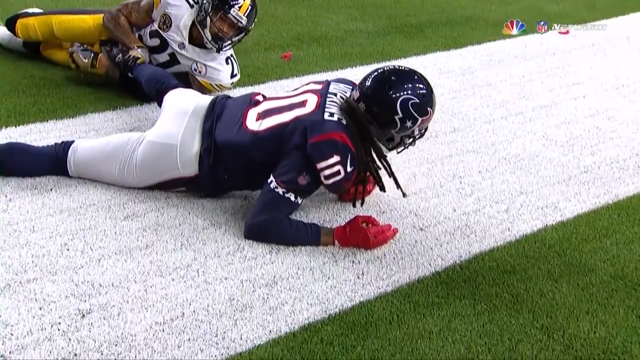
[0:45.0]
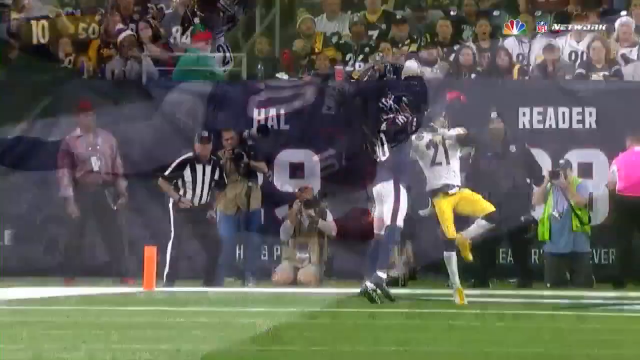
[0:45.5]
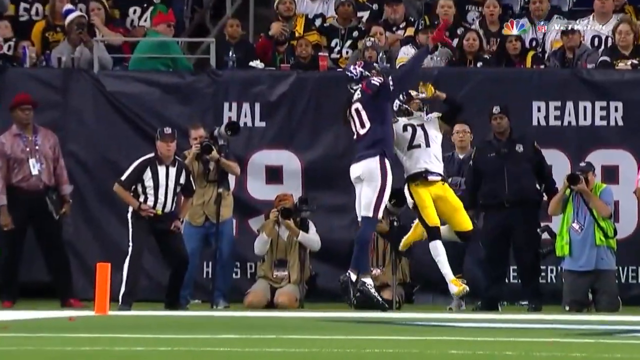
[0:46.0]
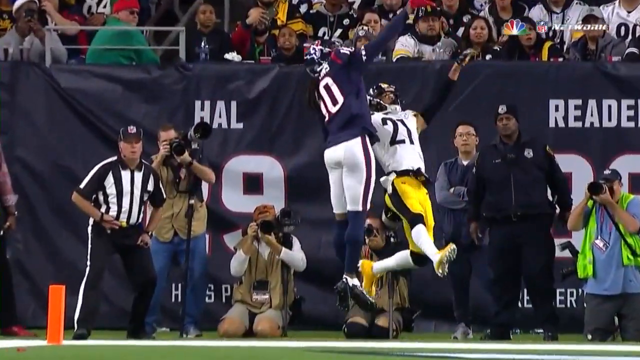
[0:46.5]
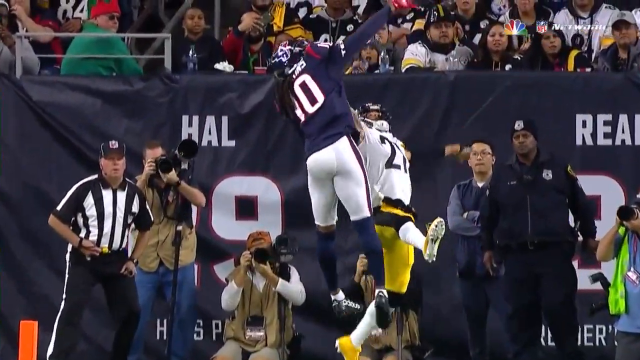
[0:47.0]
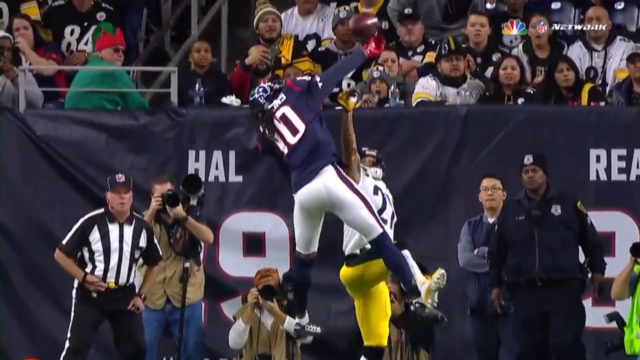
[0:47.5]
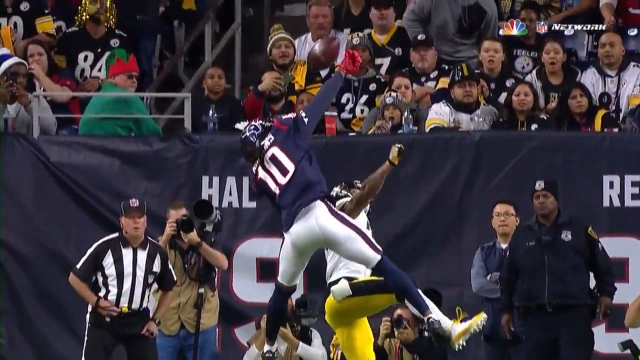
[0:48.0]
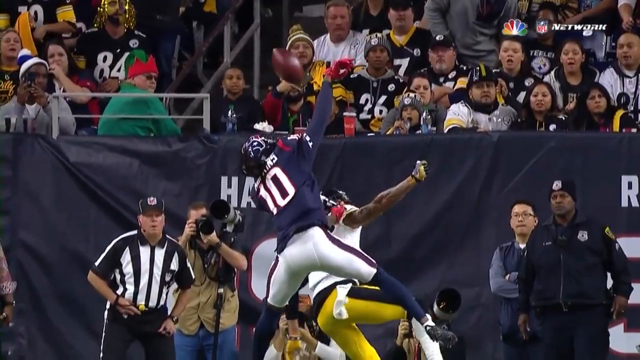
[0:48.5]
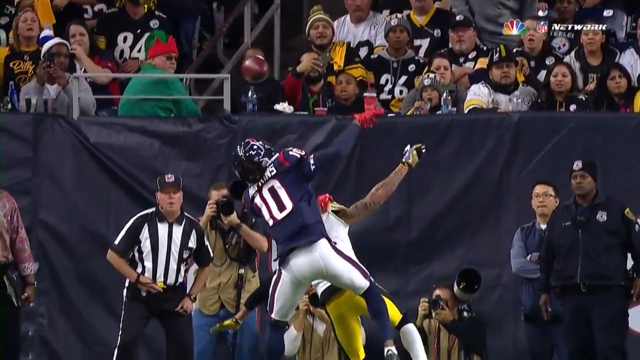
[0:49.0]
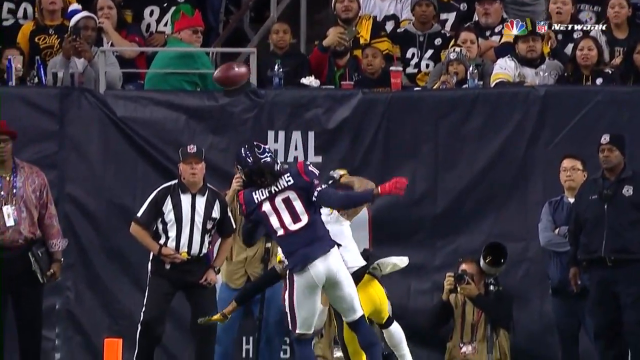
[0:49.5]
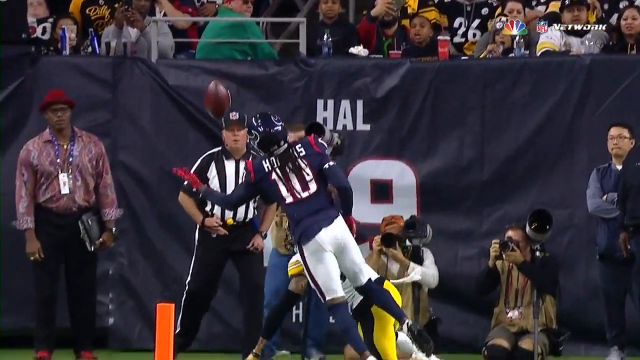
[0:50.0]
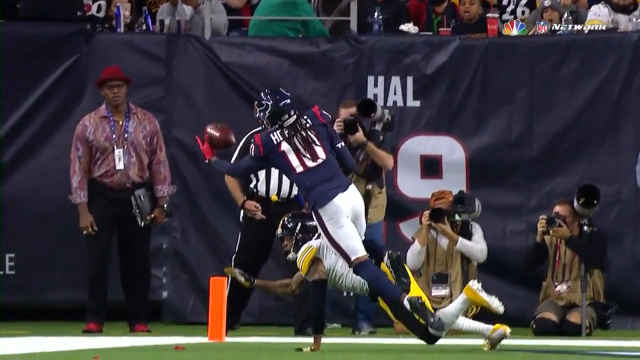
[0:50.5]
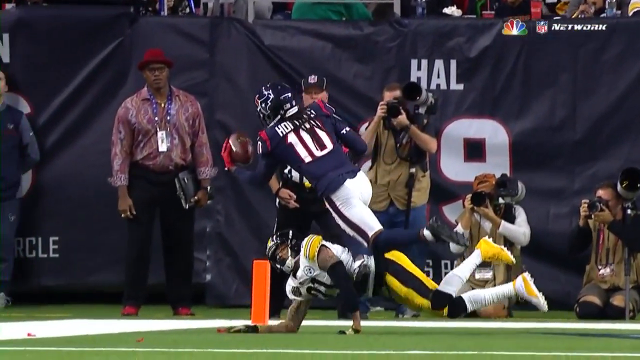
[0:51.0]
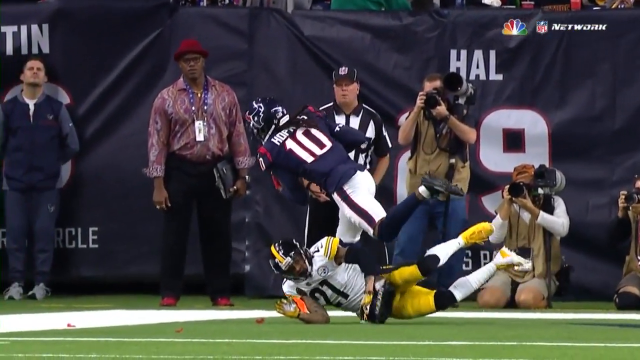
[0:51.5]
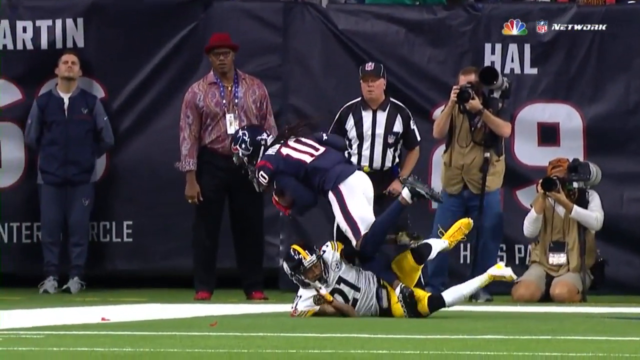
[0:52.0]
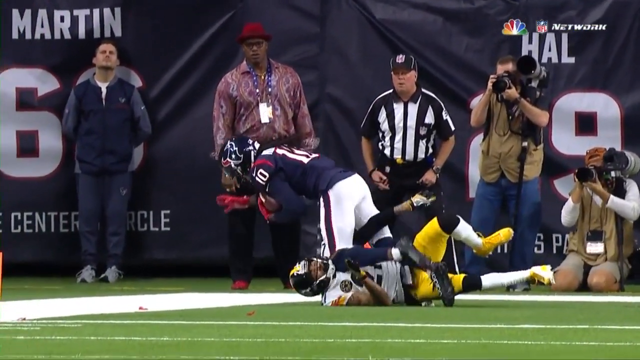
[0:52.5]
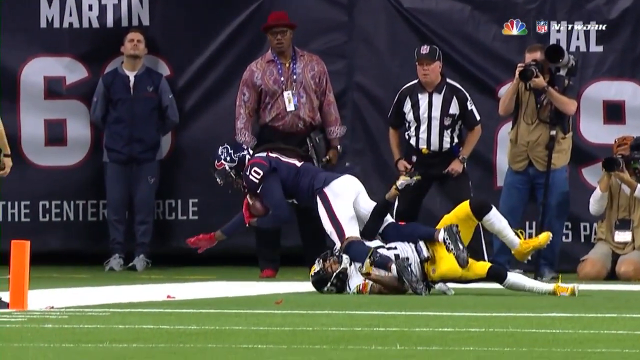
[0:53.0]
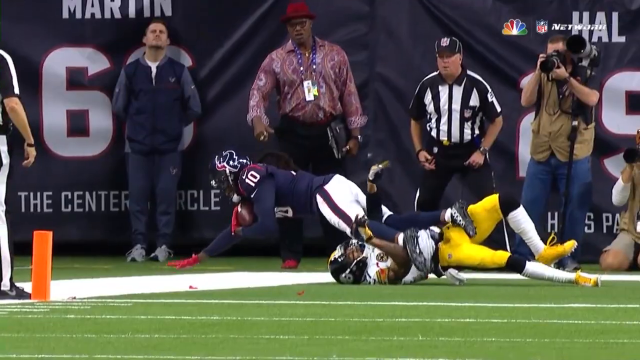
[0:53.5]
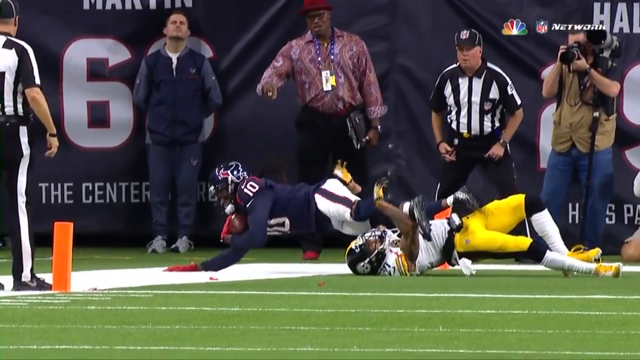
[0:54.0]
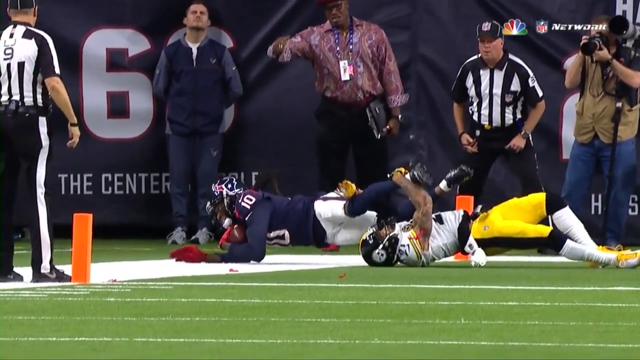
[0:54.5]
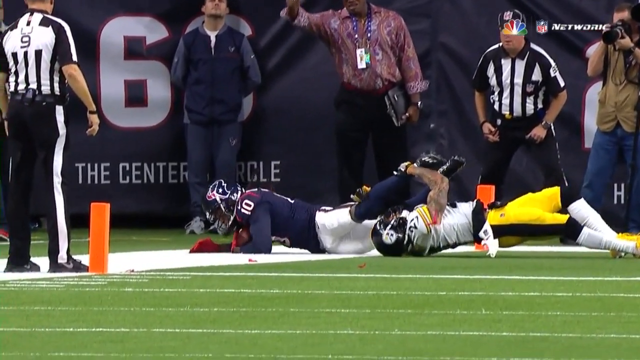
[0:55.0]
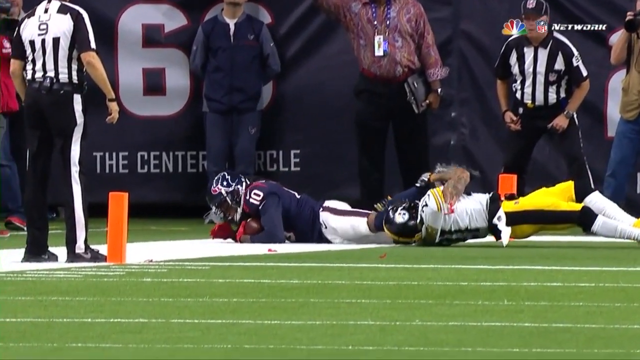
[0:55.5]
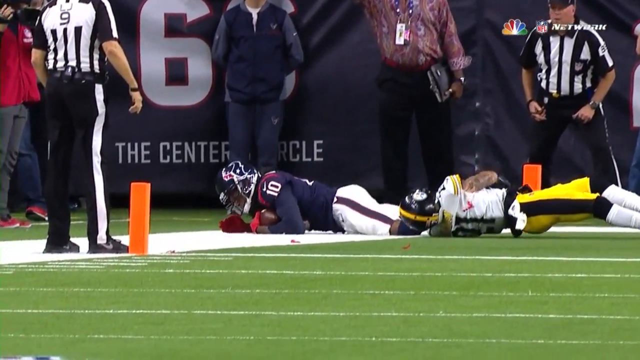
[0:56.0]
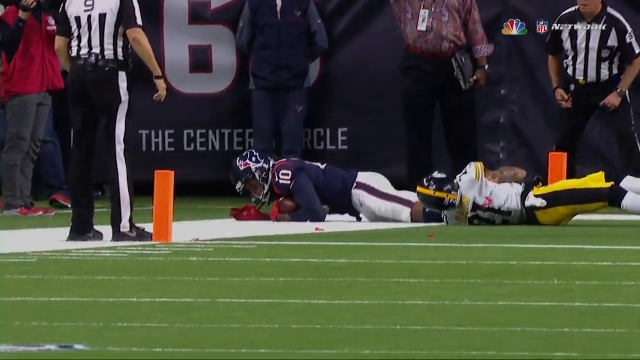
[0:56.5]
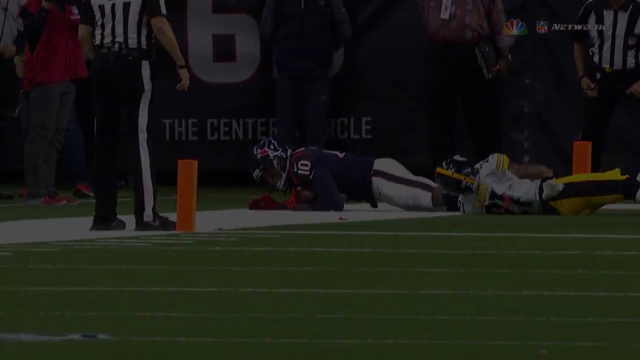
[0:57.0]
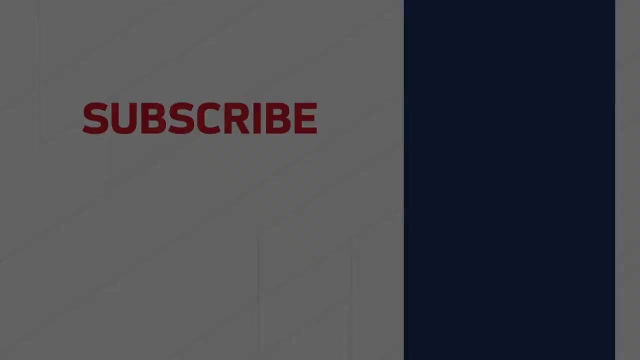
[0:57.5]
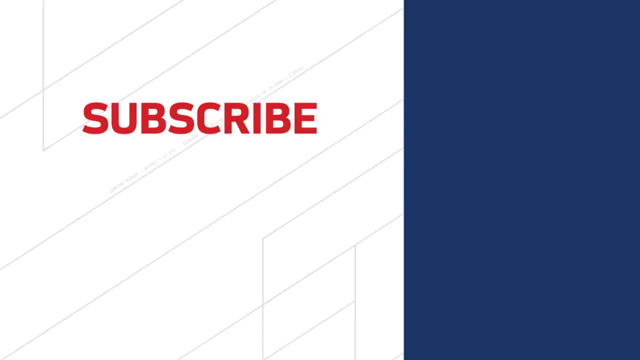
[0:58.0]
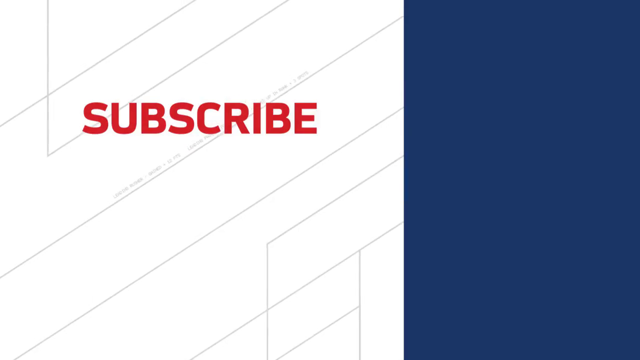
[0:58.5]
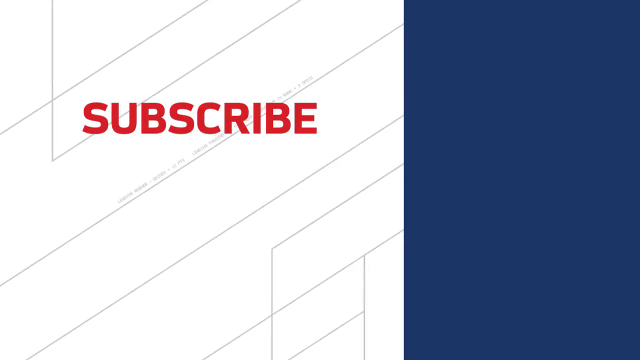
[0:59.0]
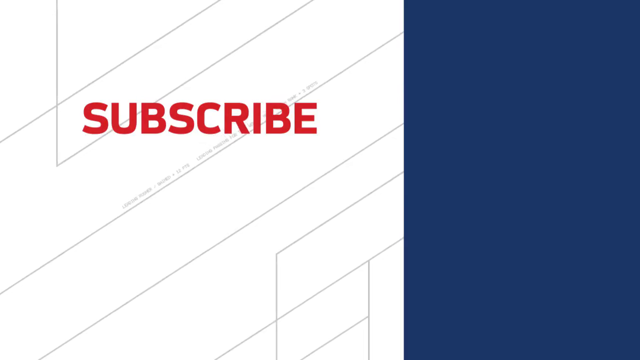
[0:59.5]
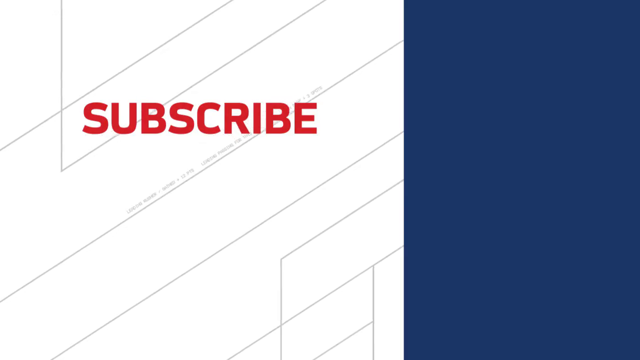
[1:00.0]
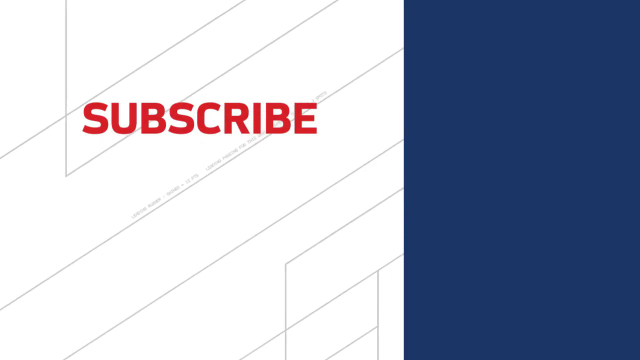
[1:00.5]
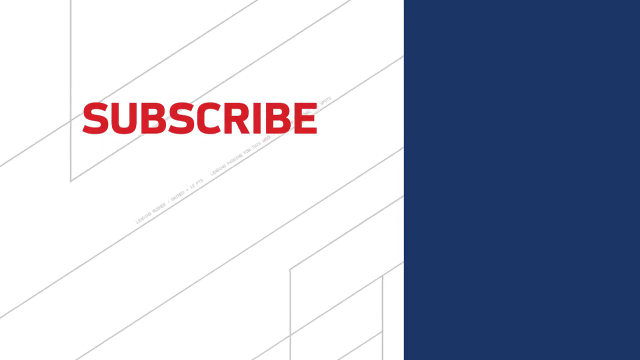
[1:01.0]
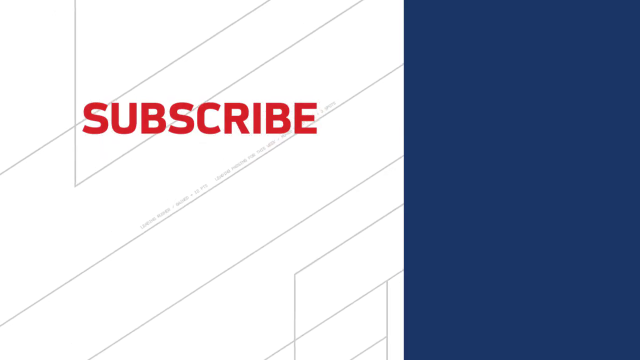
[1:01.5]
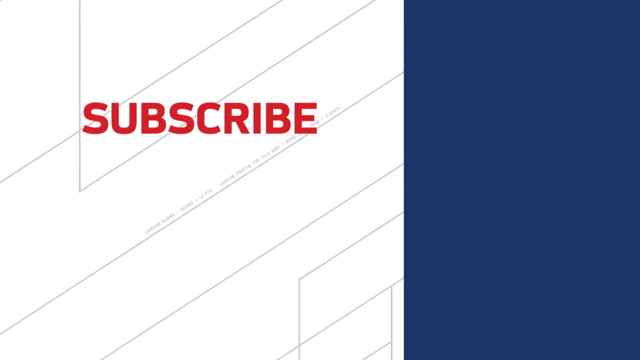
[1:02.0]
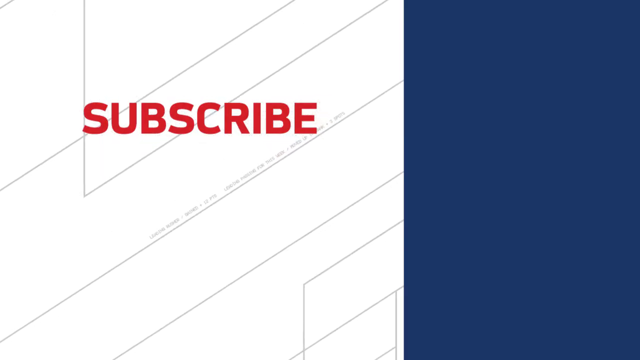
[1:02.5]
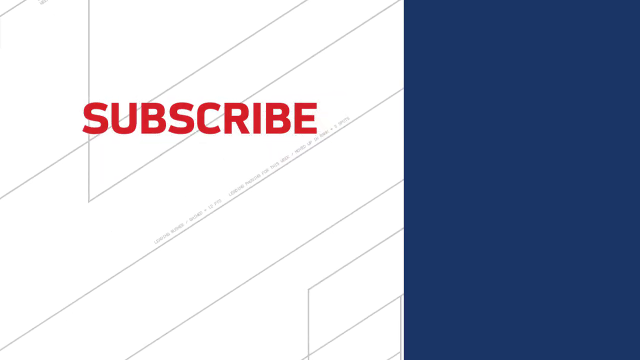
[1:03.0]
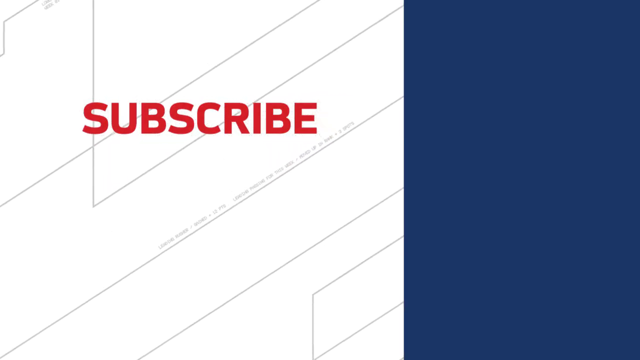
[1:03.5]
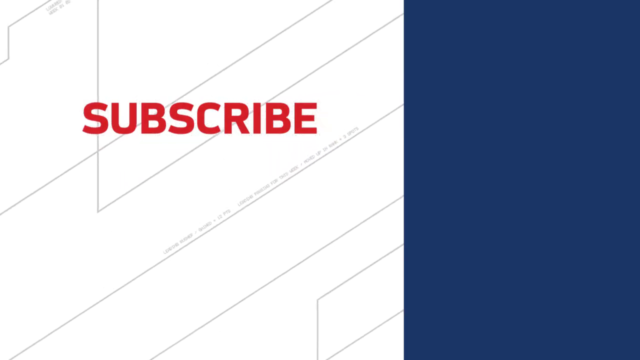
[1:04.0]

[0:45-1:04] Another replay shows Hopkins, playing for the Texans, making the catch in the end zone on the sideline with Joe Hayden covering him. Hopkins makes the initial tip with his right hand, apparently trying to catch it one-handed; the ball tips off his fingers, then he finds it and grabs it with his left hand. His right foot looks like it is down as he secures the catch with his left hand, and his right toe taps down before his right hand touches out of bounds; he appears to get both toes down inbounds before he falls. The ending sequence shows the text "subscribe" for the NFL.com official channel.